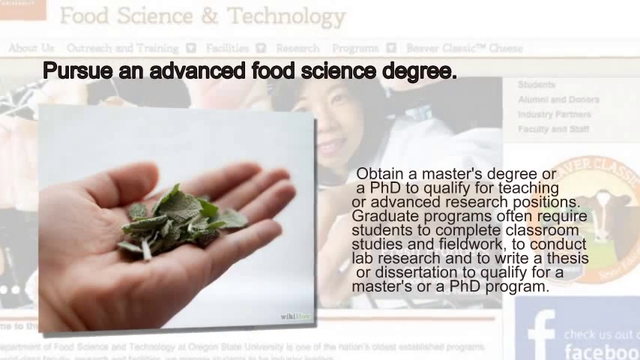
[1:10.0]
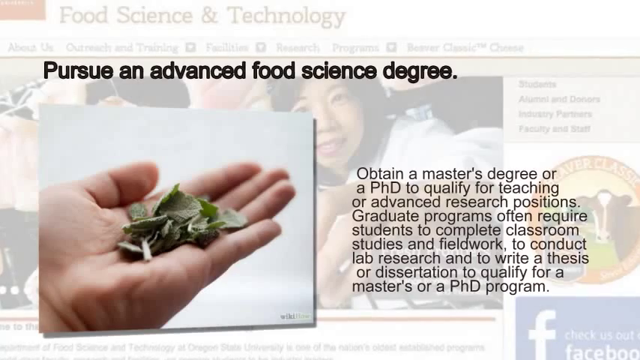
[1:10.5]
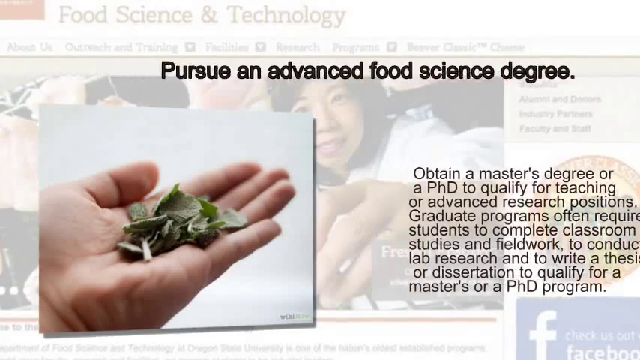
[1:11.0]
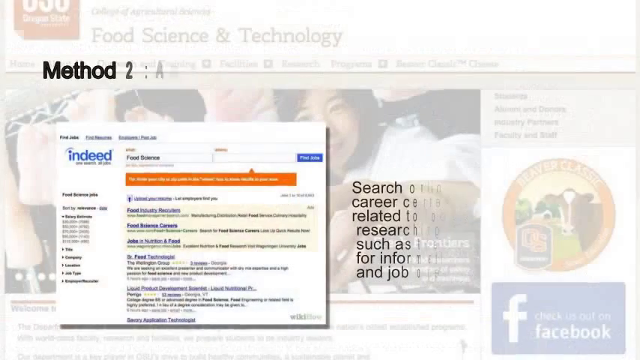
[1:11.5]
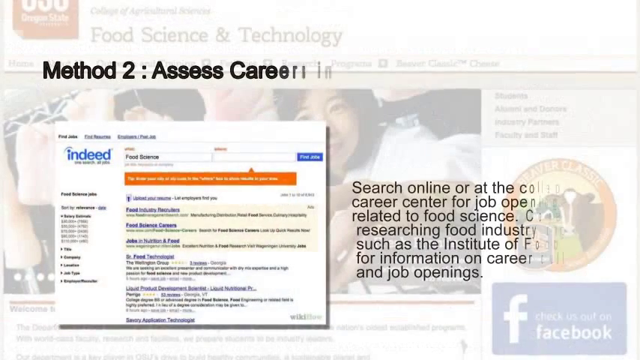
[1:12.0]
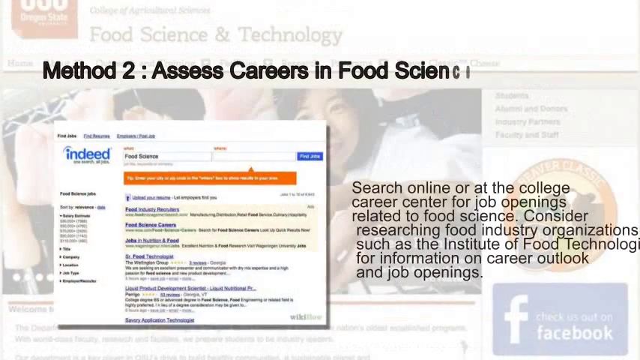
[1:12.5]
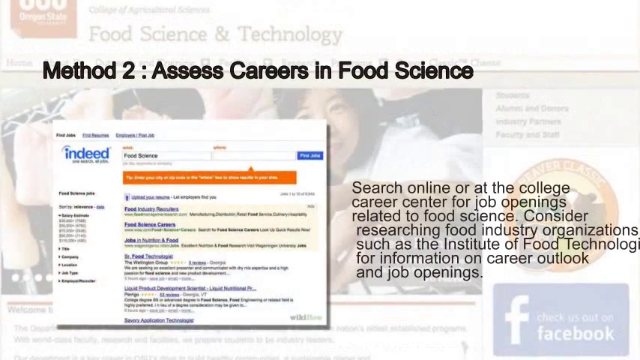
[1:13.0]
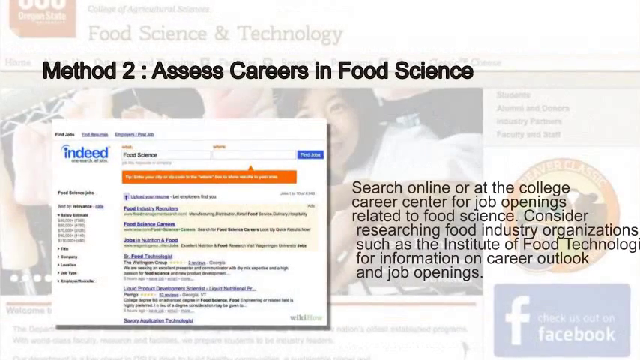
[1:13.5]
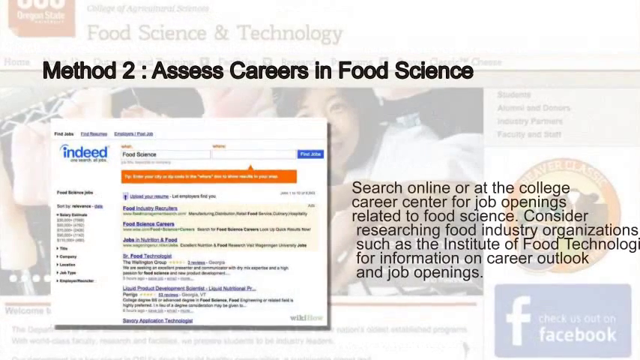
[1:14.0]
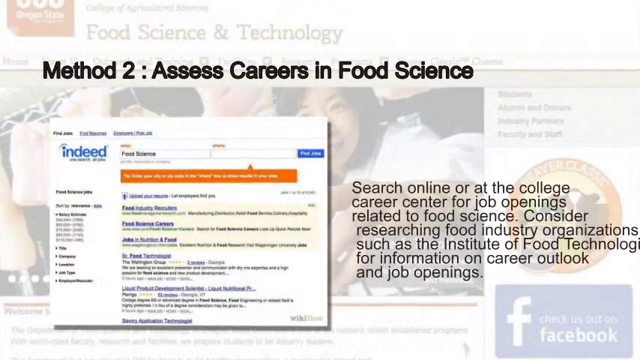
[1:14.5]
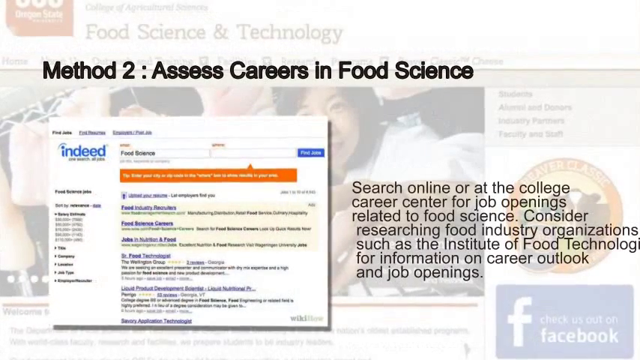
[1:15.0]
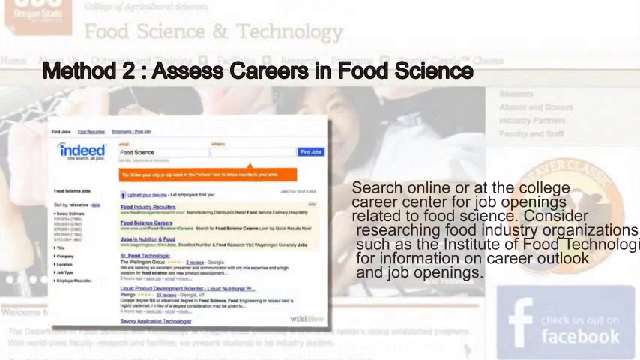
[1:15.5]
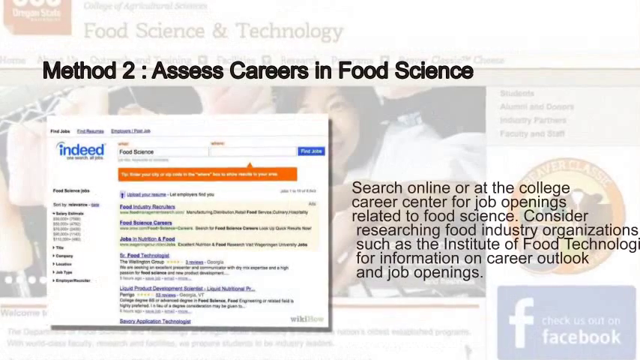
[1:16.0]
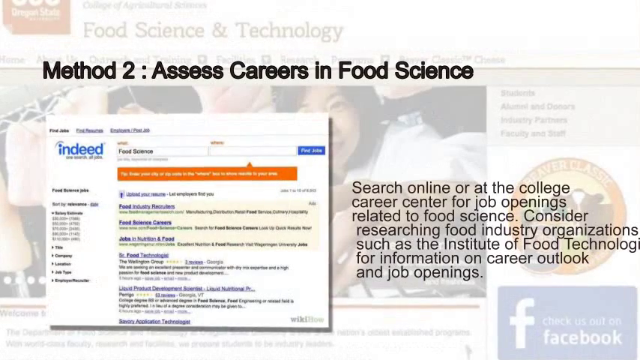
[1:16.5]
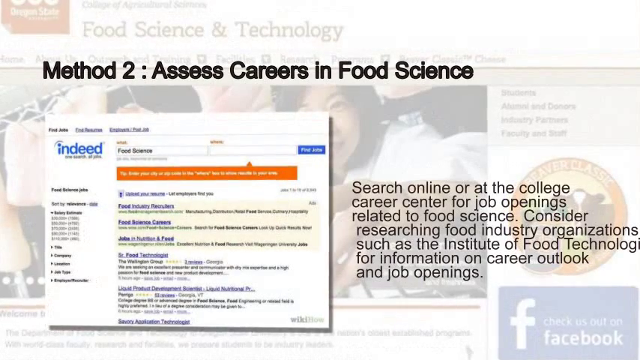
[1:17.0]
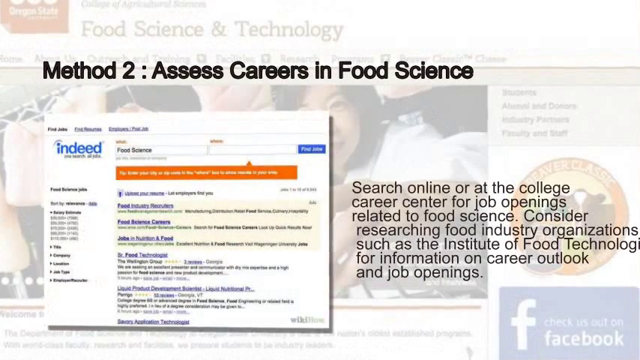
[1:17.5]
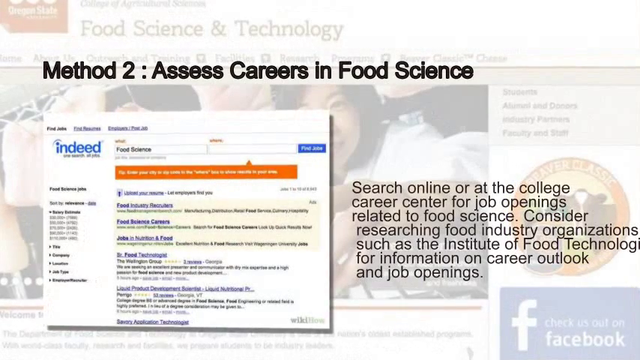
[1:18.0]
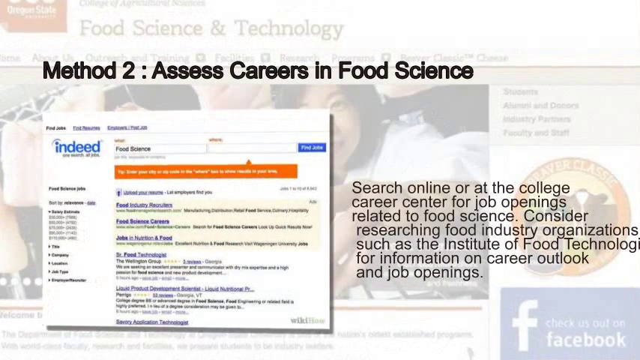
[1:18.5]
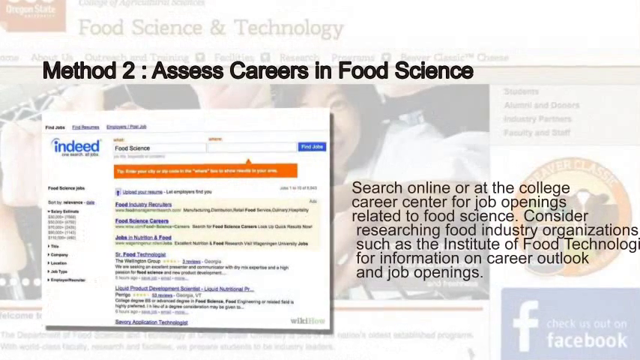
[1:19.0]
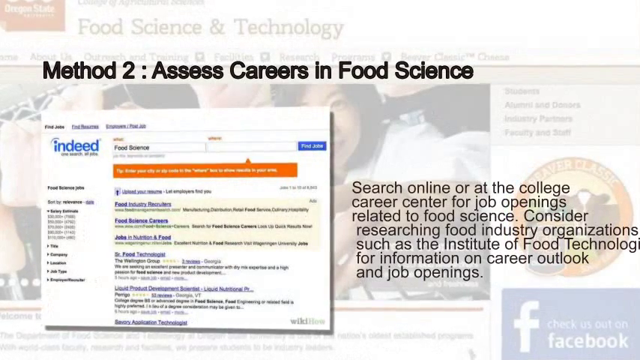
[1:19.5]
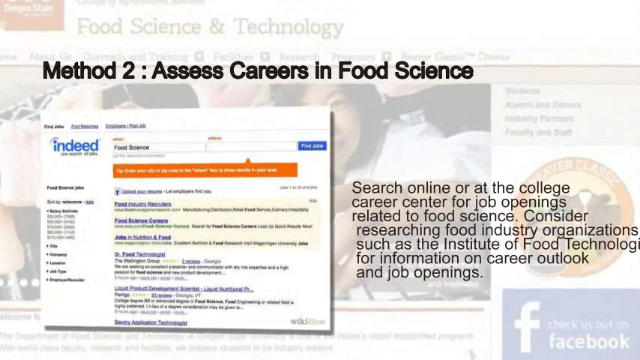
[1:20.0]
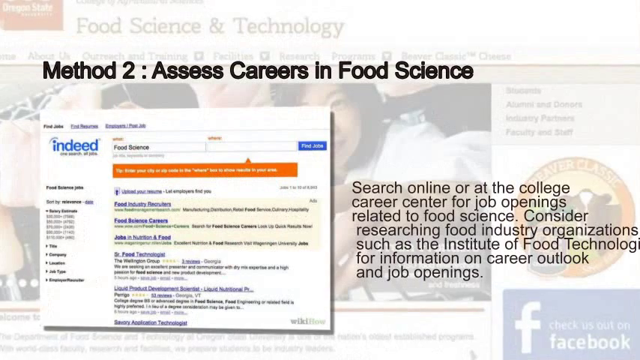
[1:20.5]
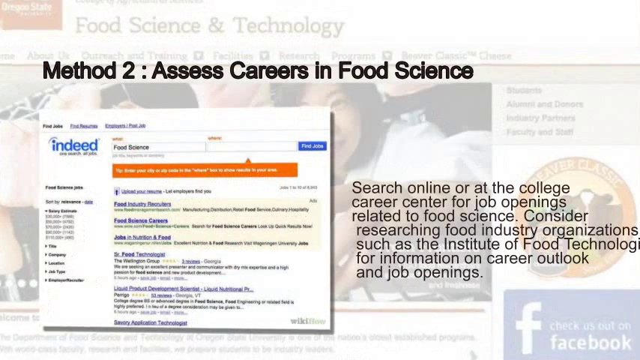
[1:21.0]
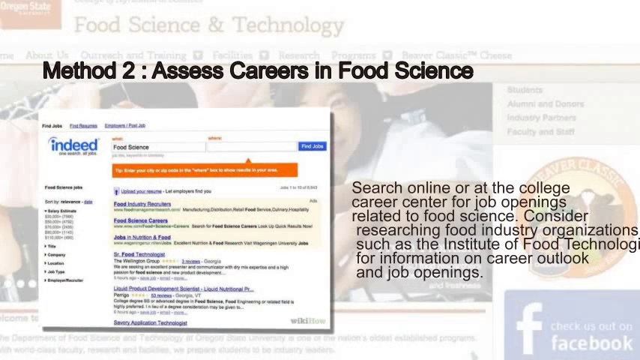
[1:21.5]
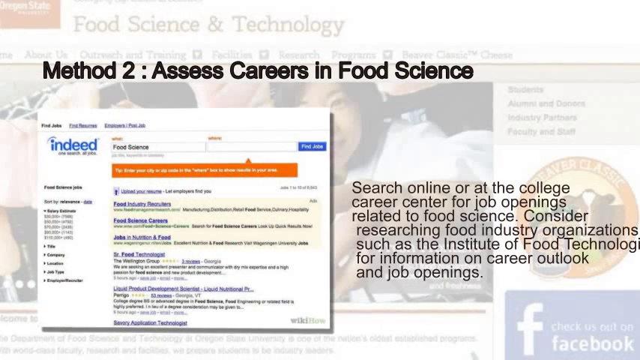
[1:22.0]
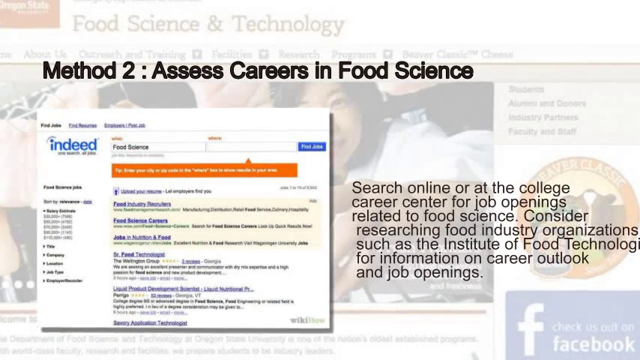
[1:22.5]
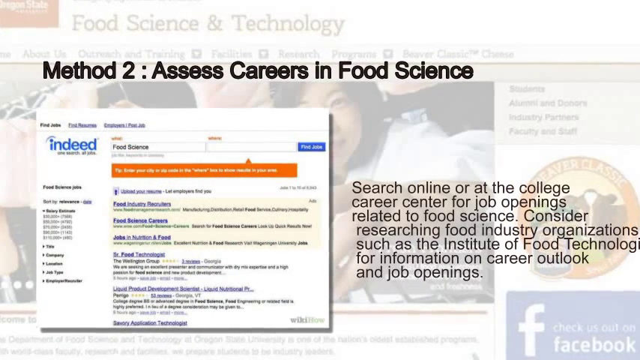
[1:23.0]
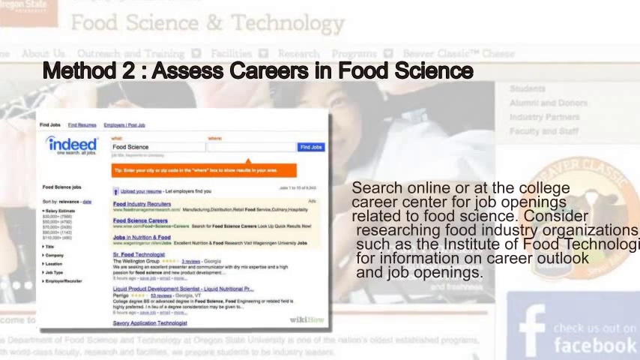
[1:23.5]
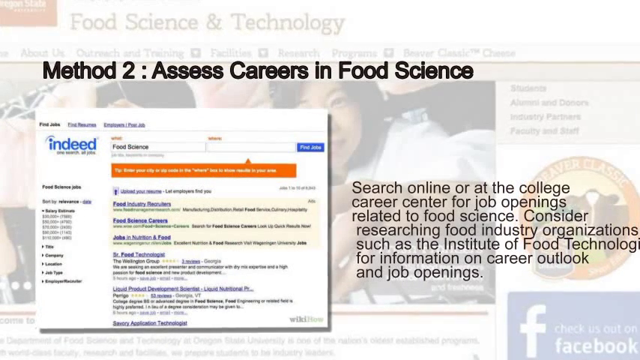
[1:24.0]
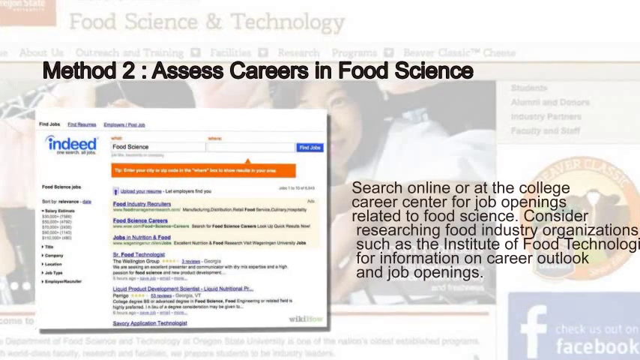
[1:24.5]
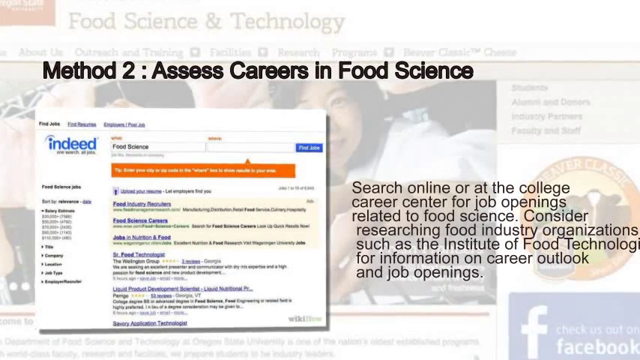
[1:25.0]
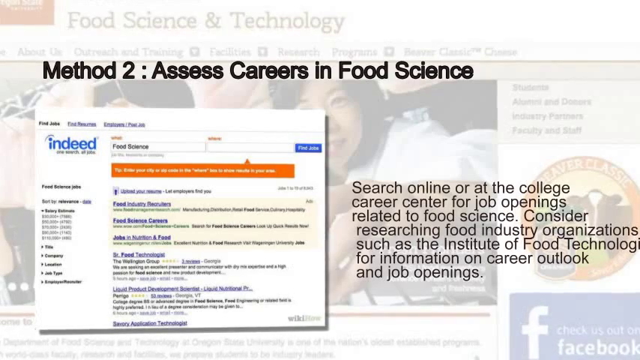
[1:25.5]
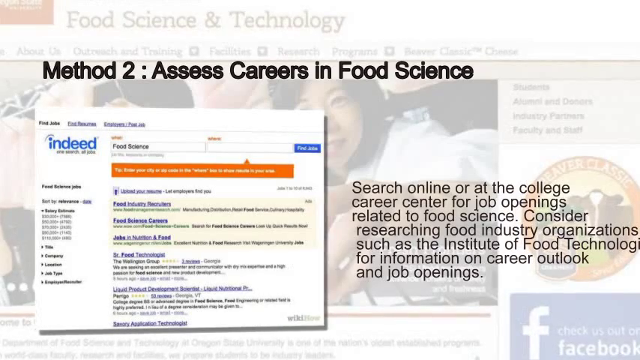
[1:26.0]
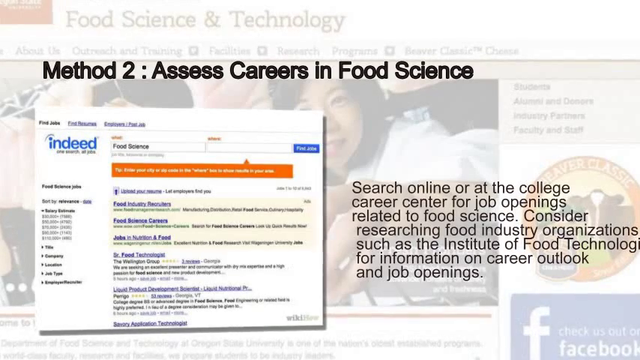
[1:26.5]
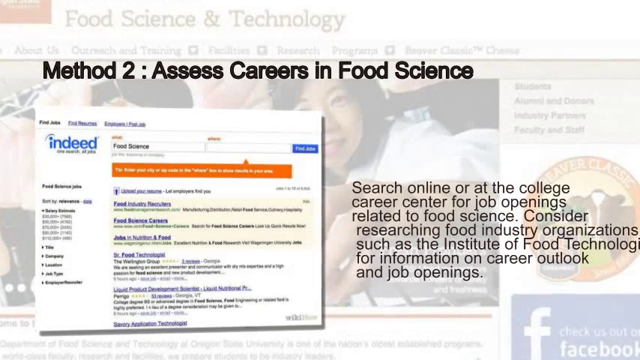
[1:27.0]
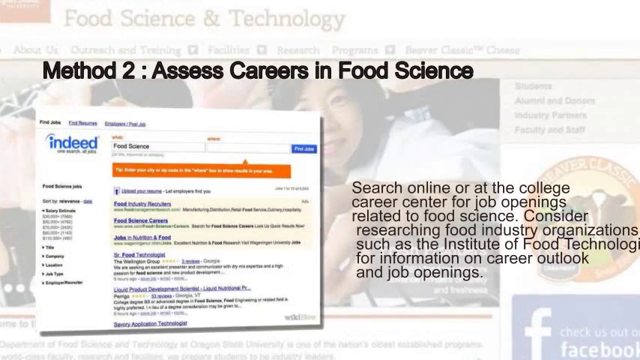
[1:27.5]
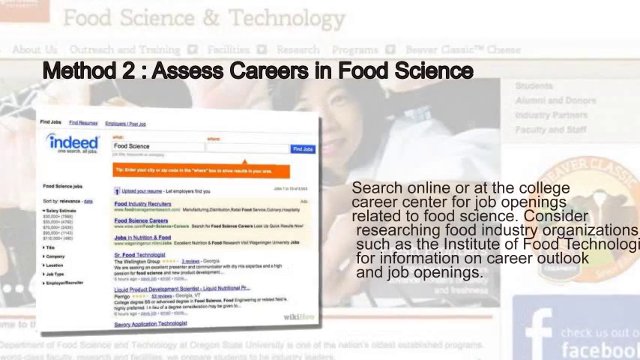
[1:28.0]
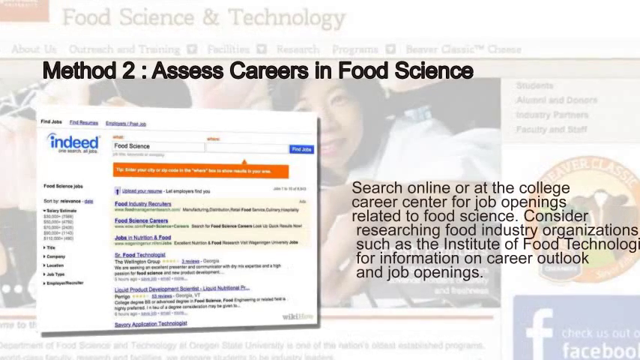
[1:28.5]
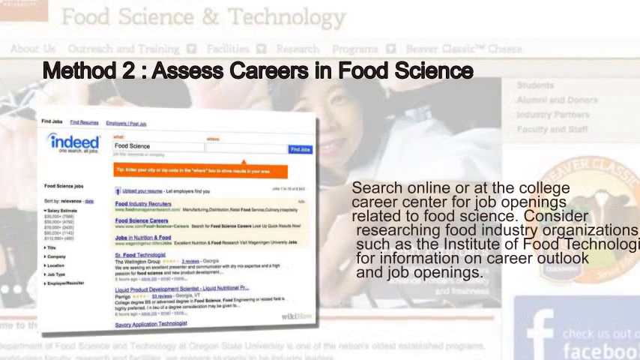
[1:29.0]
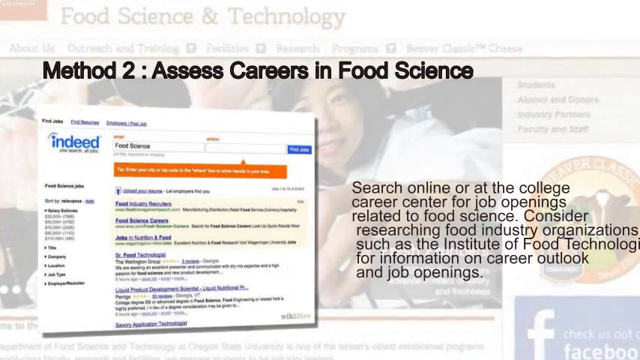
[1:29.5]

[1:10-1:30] The subject is still how to become a food scientist. The hand holding the leaves is shown with "pursue an advanced food science degree" written above it, along with "obtain a master's degree or a PhD to qualify for teaching or advanced research position. Graduate programs often require student to complete classroom studies and fieldwork to conduct lab research and to write a thesis or dissertation to qualify for master's or PhD program." The video then shifts to an image seen earlier at the bottom. In the background the first article, on food science and technology, is still visible and fading away, with the man and the lady. Text reads "method two is assess careers in food science" and "search online or at the college career center for job openings related to food science consider researching food industry organizations such as the Institute of Food Technology for information on career outlook and job openings." An article related to this appears, but it is blurry and cannot be seen clearly.